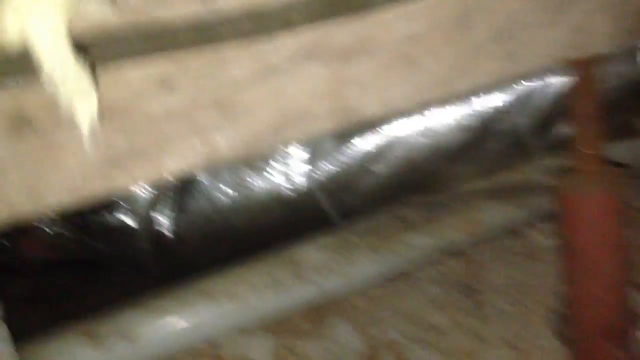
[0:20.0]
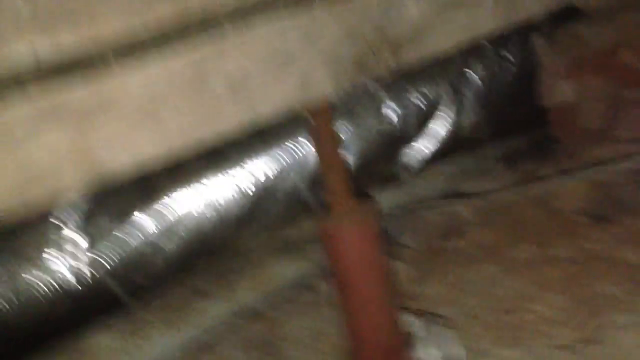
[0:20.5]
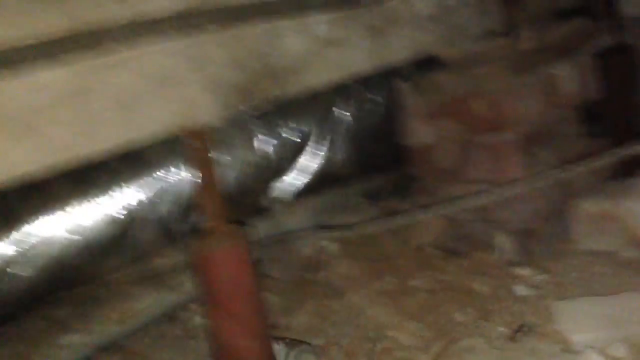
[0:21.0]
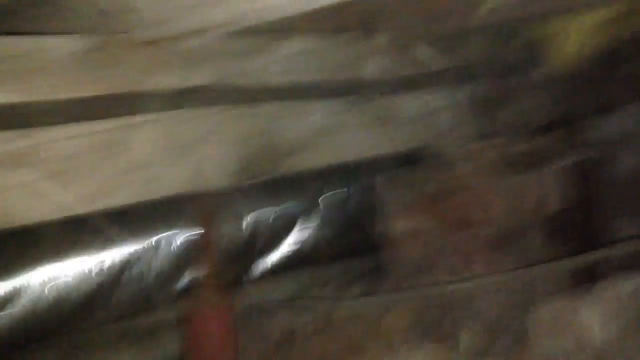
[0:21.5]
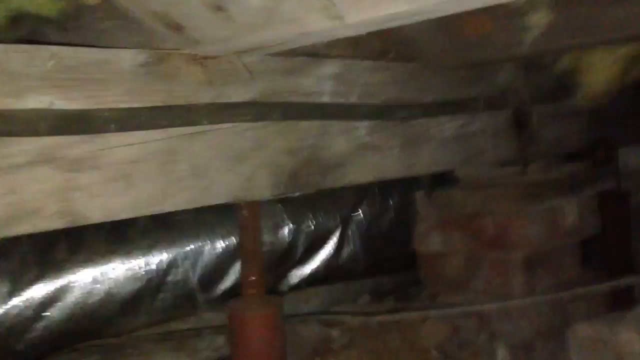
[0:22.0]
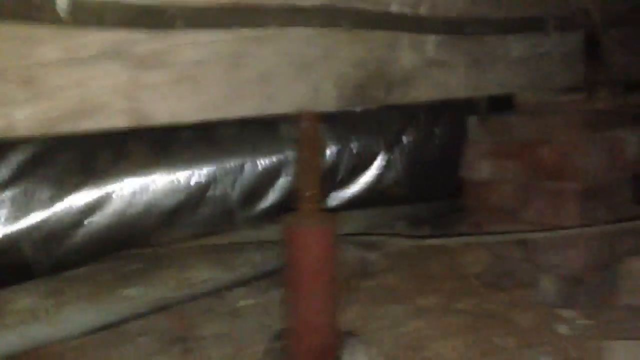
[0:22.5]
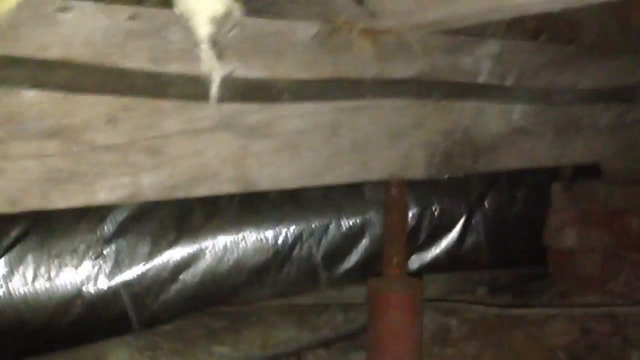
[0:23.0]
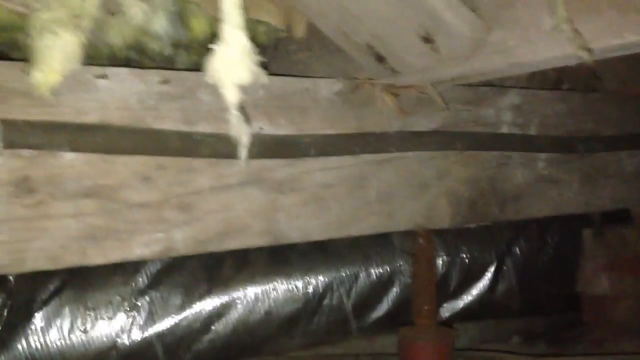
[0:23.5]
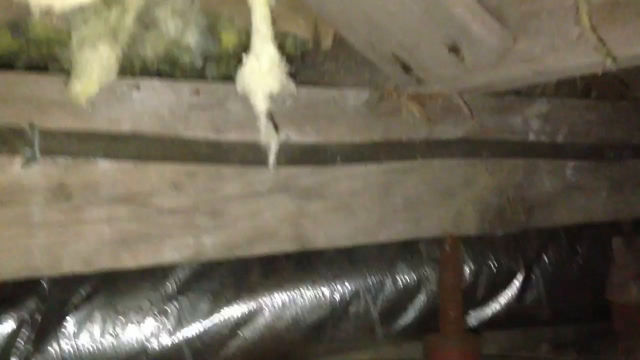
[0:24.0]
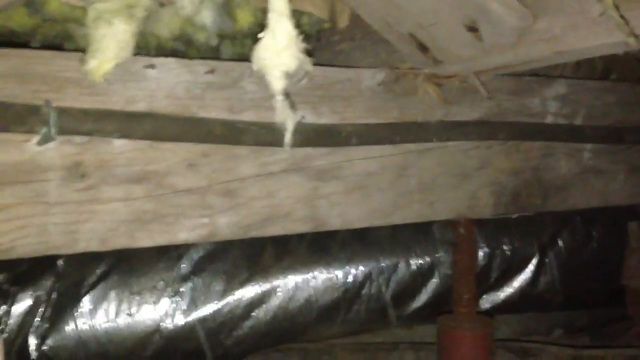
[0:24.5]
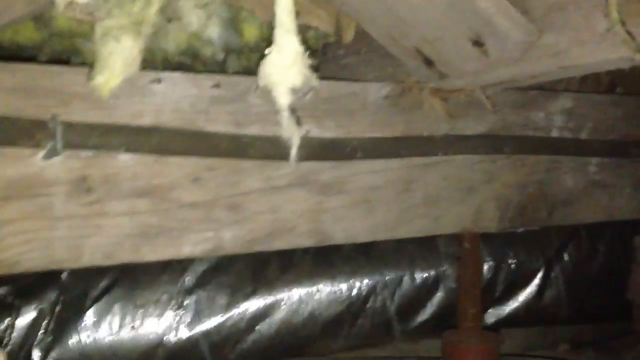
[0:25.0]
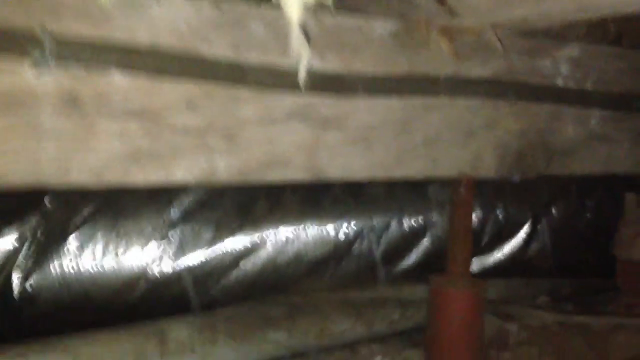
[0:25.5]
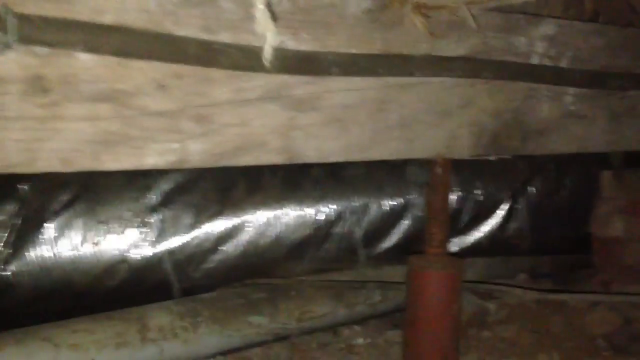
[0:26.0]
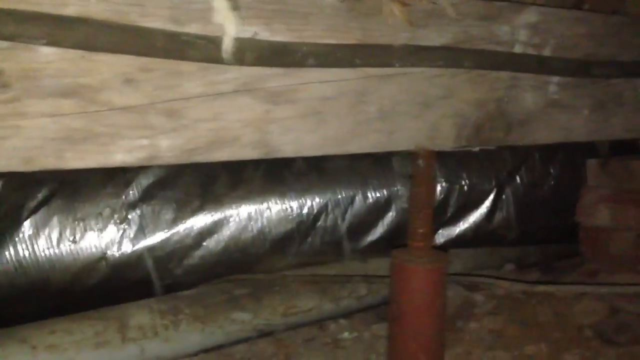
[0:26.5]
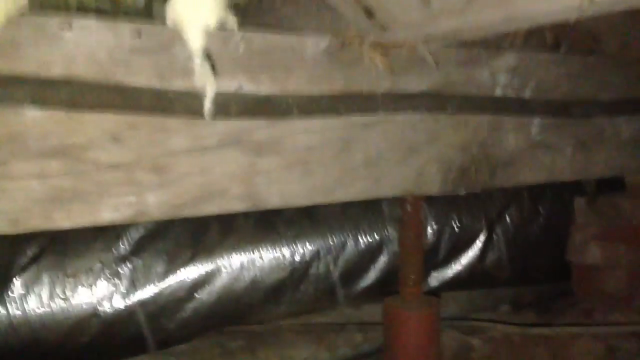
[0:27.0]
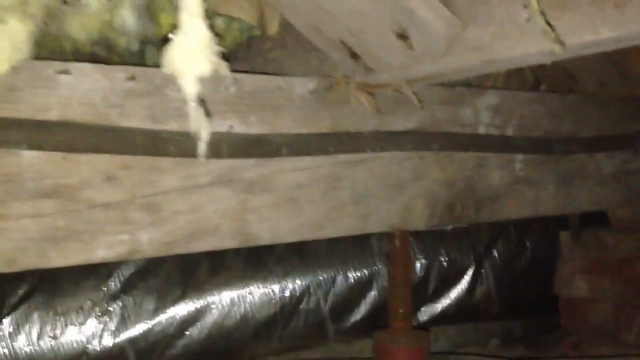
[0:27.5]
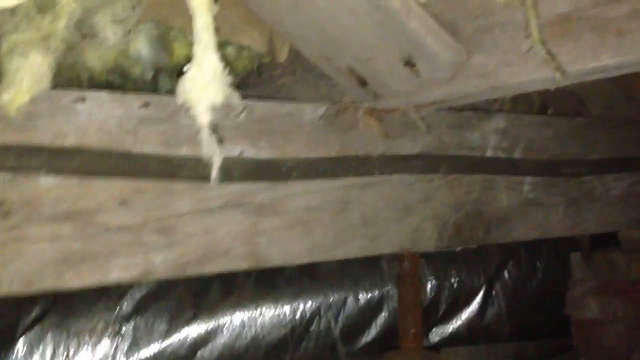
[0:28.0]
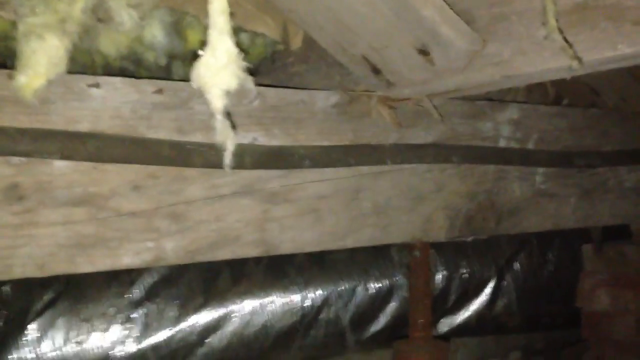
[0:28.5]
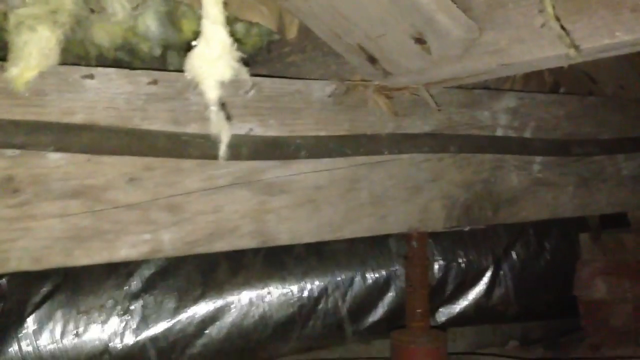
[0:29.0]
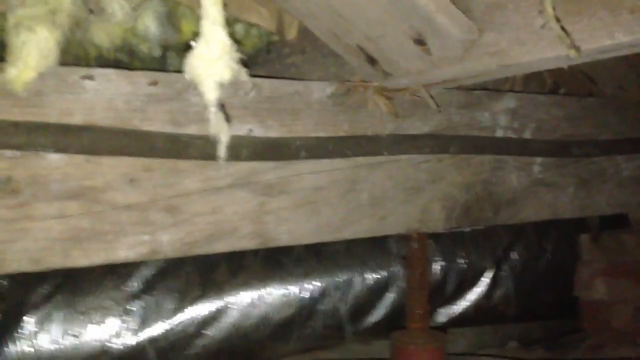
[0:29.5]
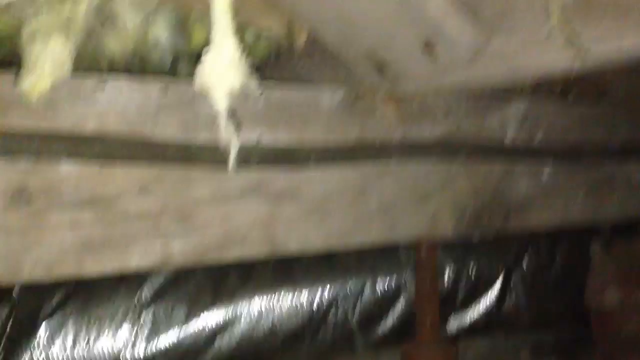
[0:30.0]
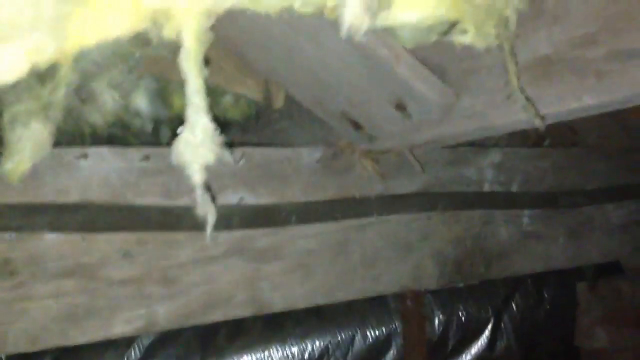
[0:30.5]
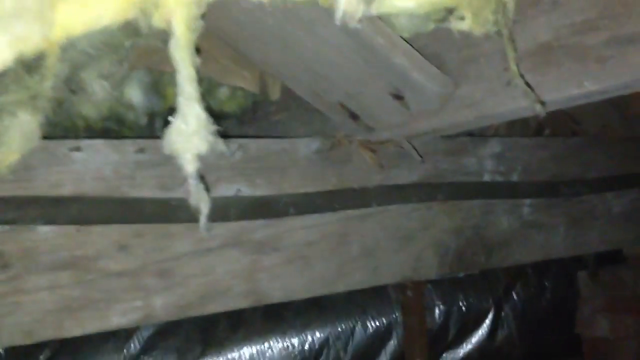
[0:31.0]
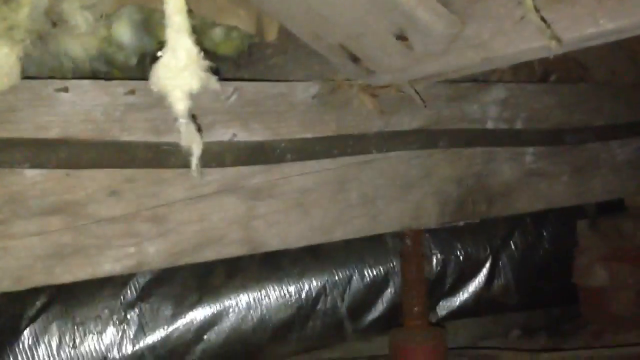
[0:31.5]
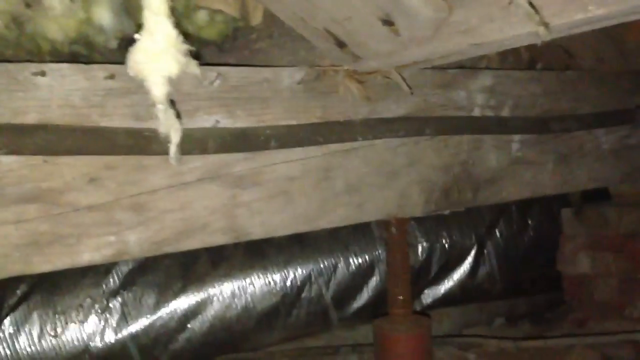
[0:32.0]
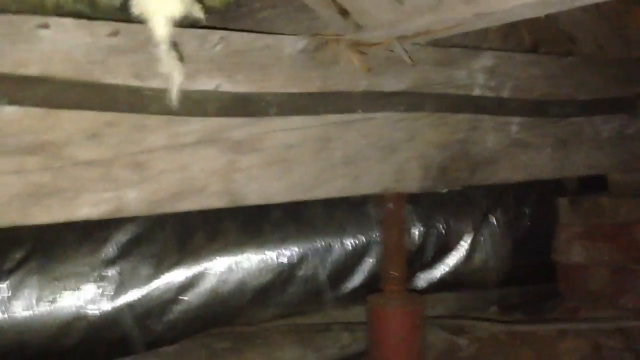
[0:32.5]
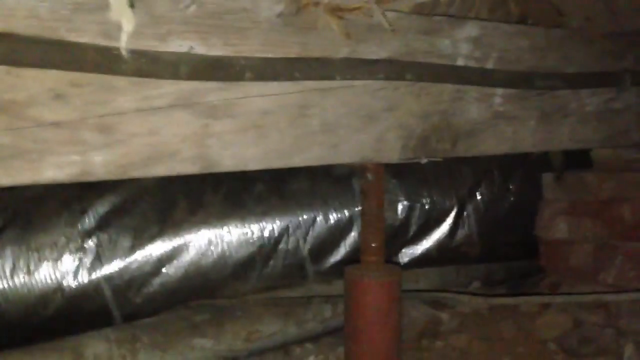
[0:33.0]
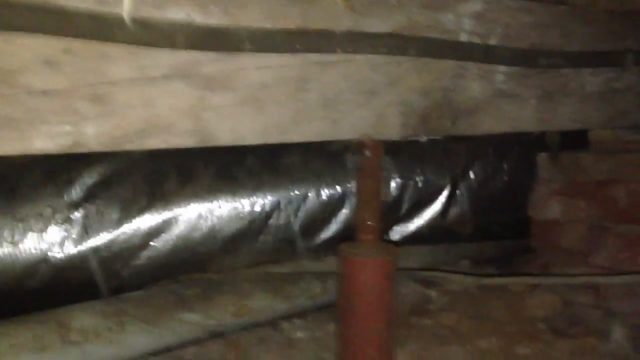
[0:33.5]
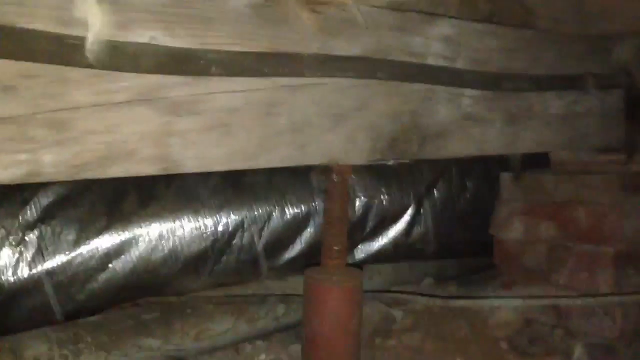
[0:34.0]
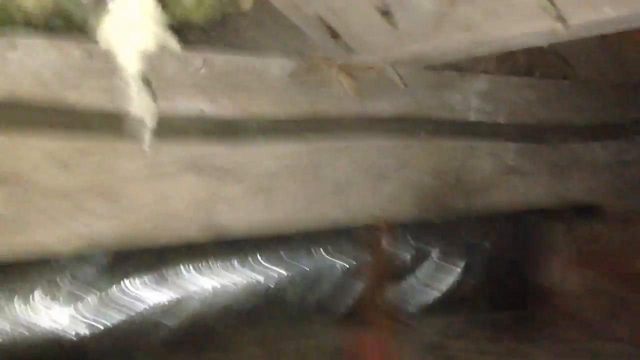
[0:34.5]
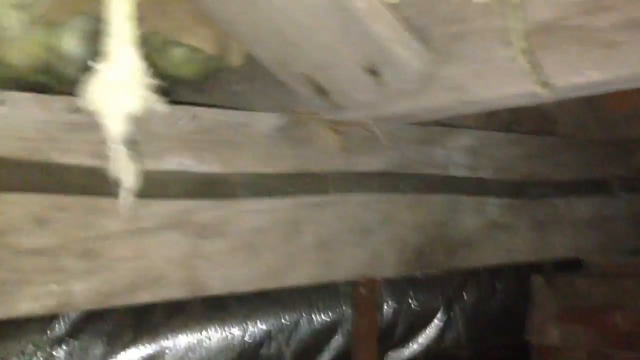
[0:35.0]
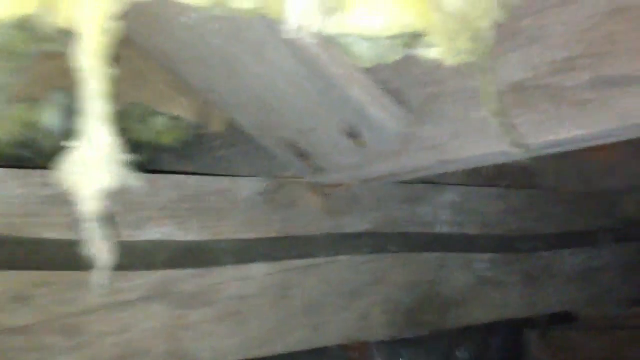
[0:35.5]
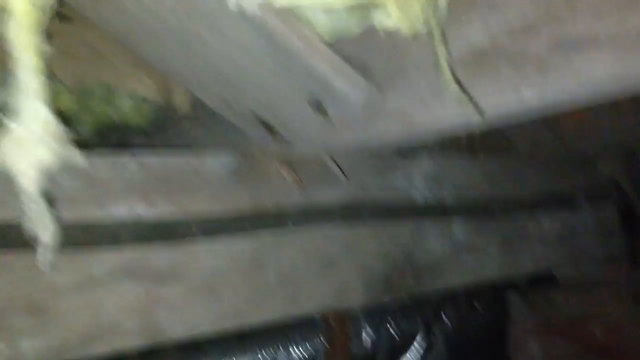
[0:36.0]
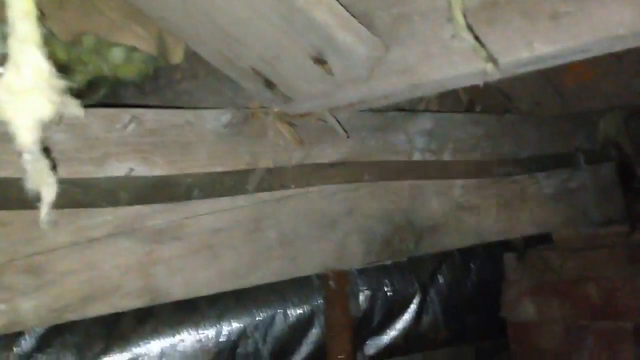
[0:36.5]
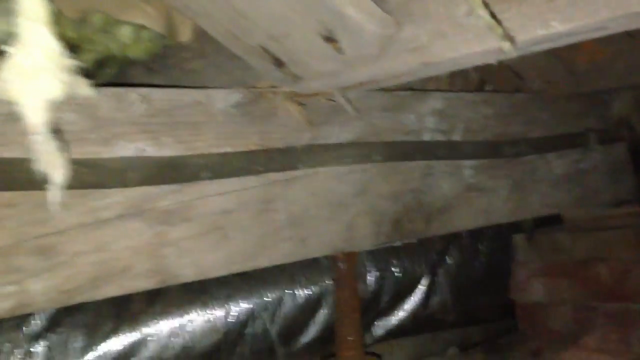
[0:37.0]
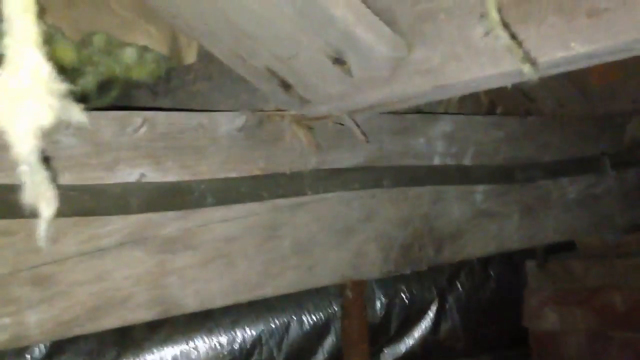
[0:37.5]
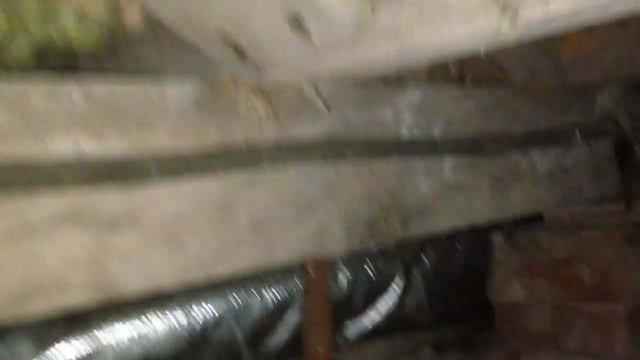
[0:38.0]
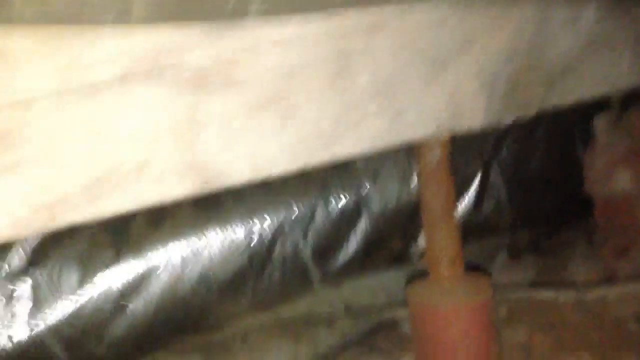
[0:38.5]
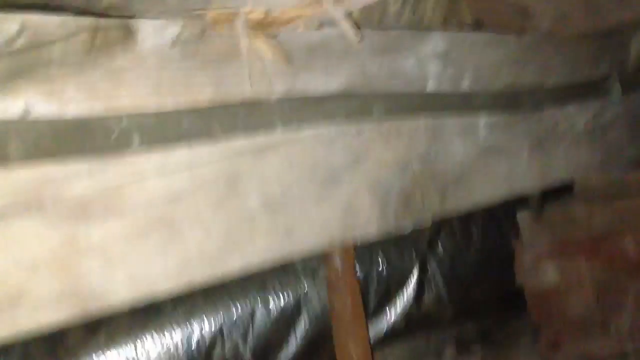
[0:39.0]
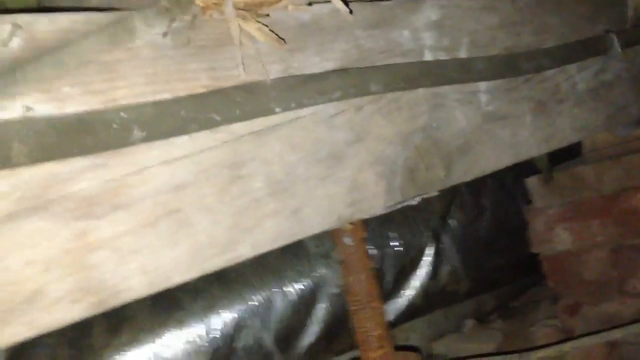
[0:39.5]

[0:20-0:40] The camera pans over to the right. In the top left corner is the bottom edge of a 2x4, then a little dark brown gap, and another 2x4 coming from about the center on the left, angling up and going off the top before it reaches the right side. Below that is what almost looks like some sort of pipe wrapping, and below that more wood runs across to the right. In the center, angling up to the left about halfway up, a red, rusty-looking jack holds up the wood at the top. The shaky camera straightens up a little. Cobwebs are visible on the right side, with a little of the rooftop above. The camera faces it straight on, then moves up to the left a little, showing some metal across the top right, and on the left side what almost looks like asbestos with two big strands hanging down. The camera shakes, moves back down a little, back up, and back down, still shaking badly, focusing on the jack while shaking back and forth. It moves back up: to the right of the asbestos, a piece of wood comes down from the top just in from the left corner, angling down to about the middle, and connects to a piece of wood that goes off the right side. Between these at the top, more yellow asbestos hangs down. He moves the camera down and forward a little on the jack, and what looks like a crowbar comes in from the left side toward the top and taps on the wood.